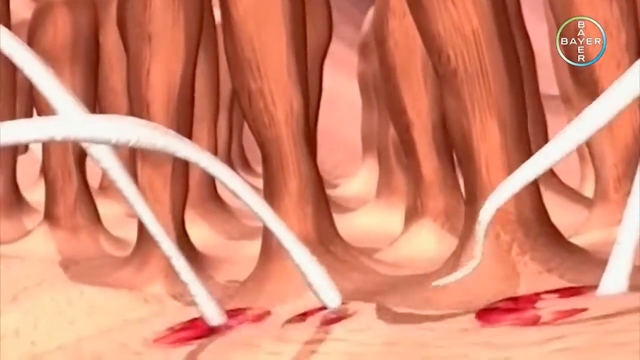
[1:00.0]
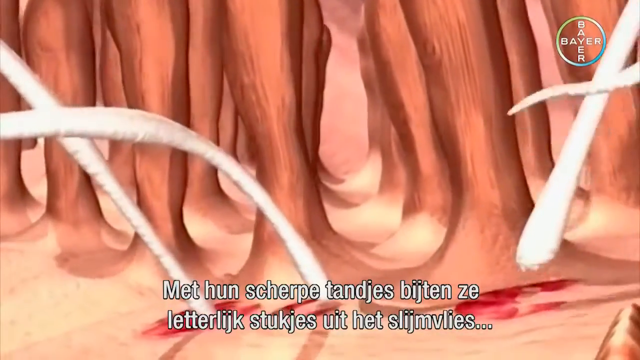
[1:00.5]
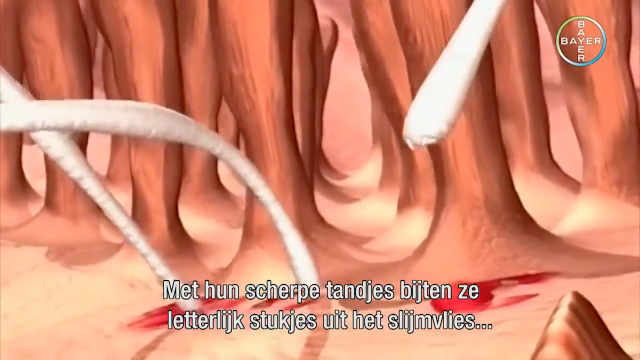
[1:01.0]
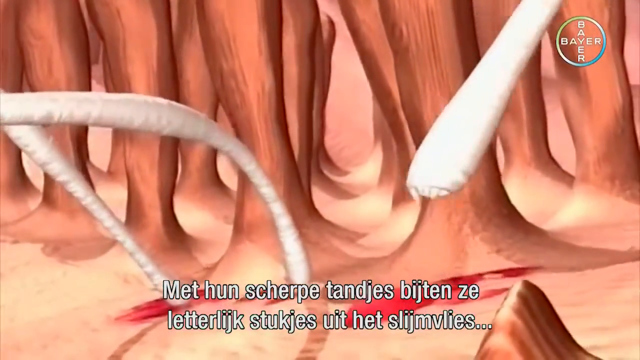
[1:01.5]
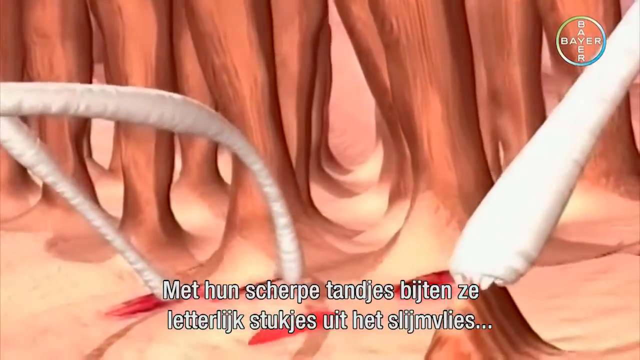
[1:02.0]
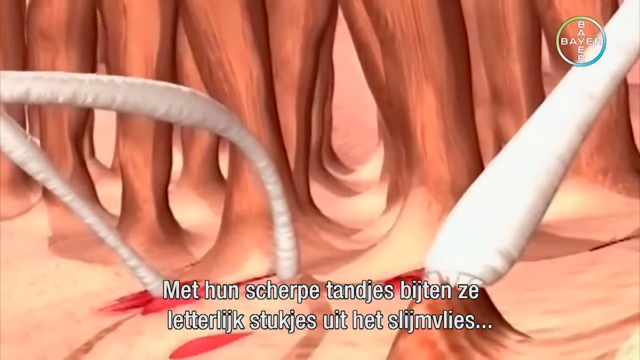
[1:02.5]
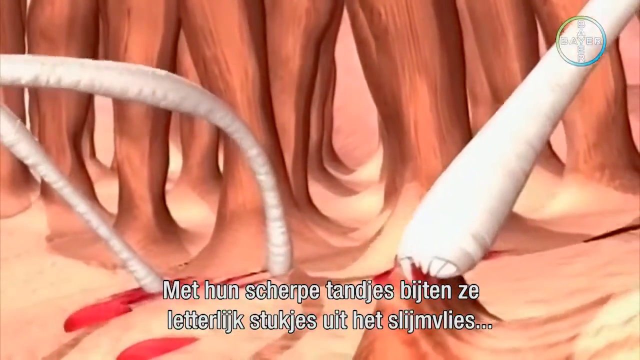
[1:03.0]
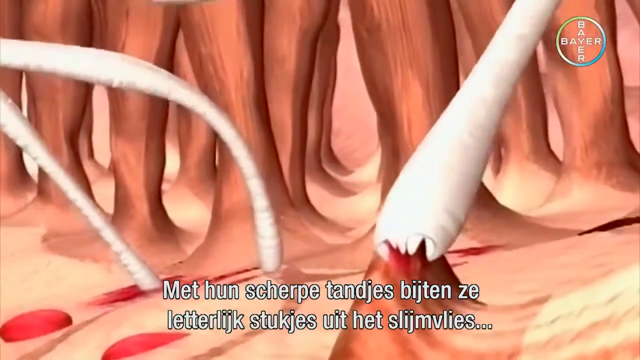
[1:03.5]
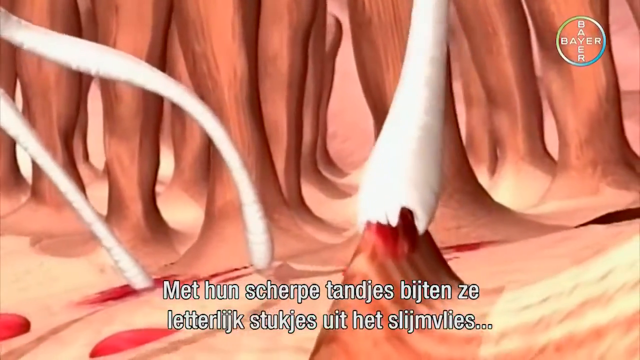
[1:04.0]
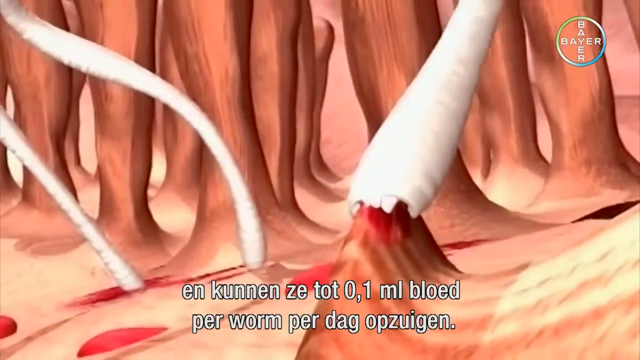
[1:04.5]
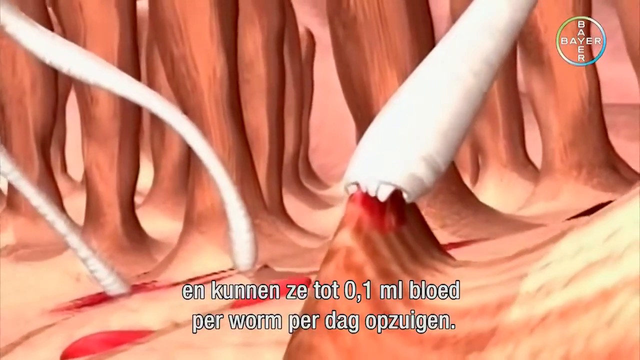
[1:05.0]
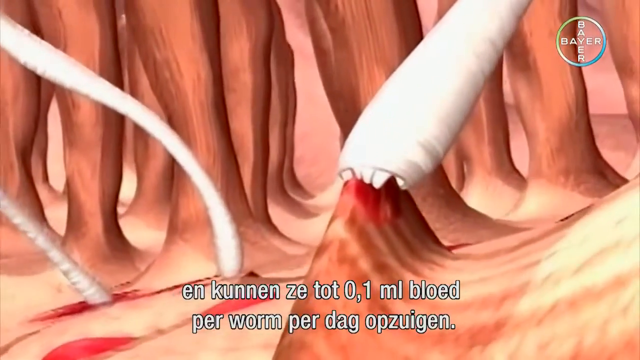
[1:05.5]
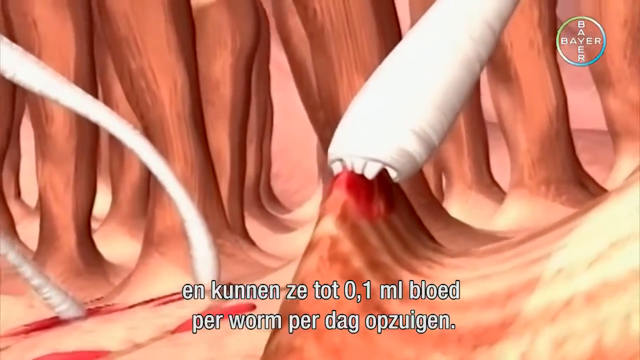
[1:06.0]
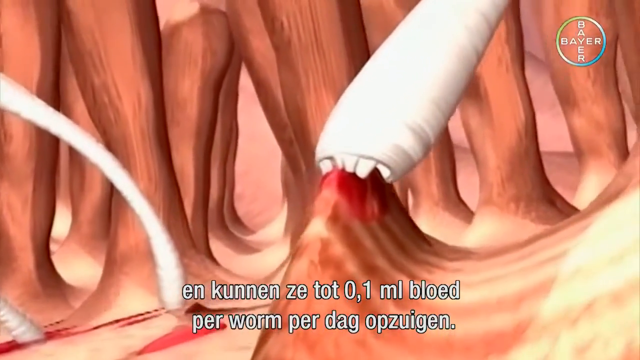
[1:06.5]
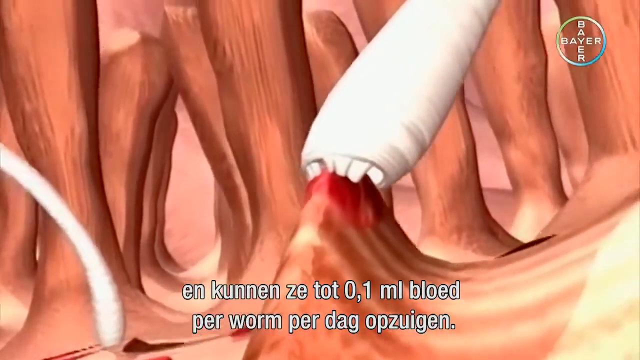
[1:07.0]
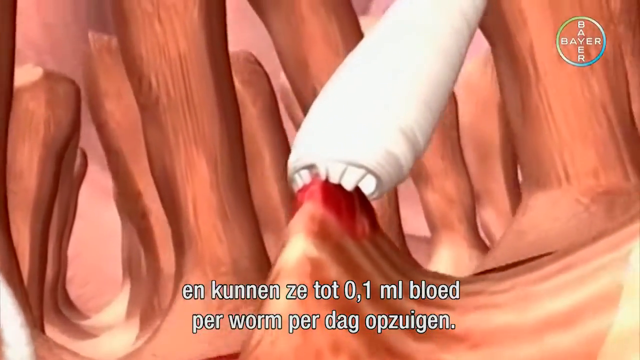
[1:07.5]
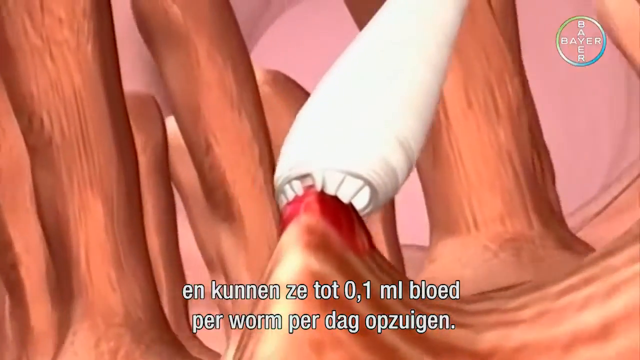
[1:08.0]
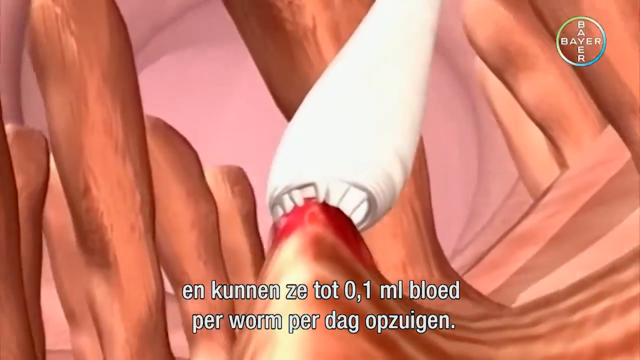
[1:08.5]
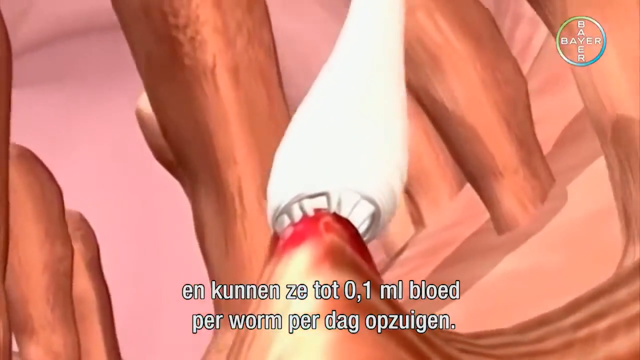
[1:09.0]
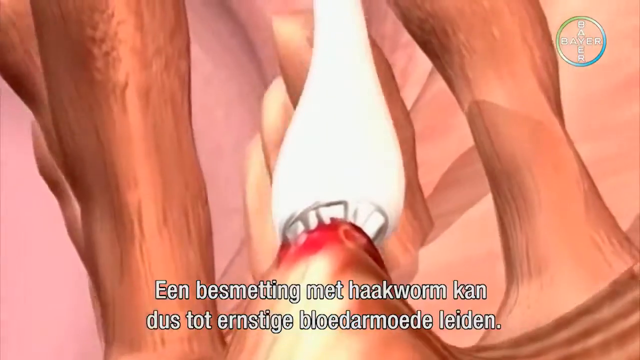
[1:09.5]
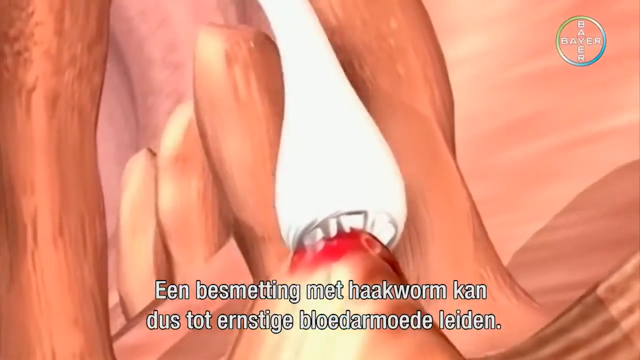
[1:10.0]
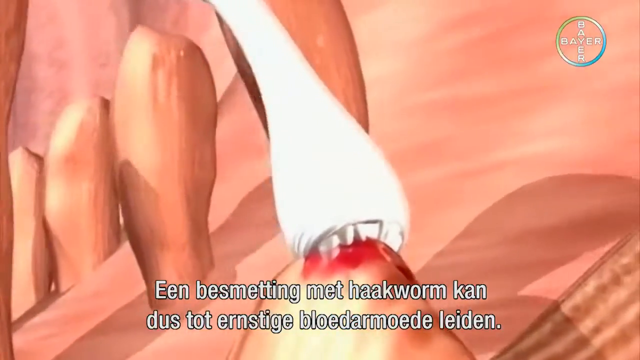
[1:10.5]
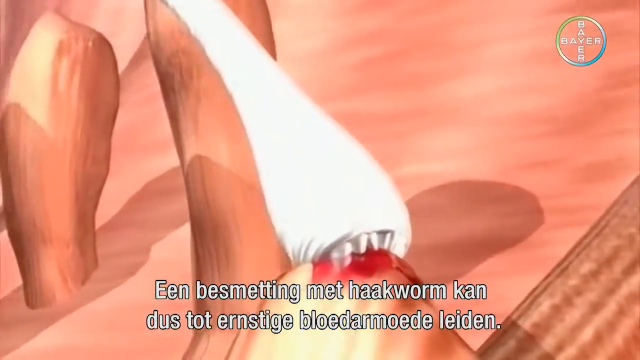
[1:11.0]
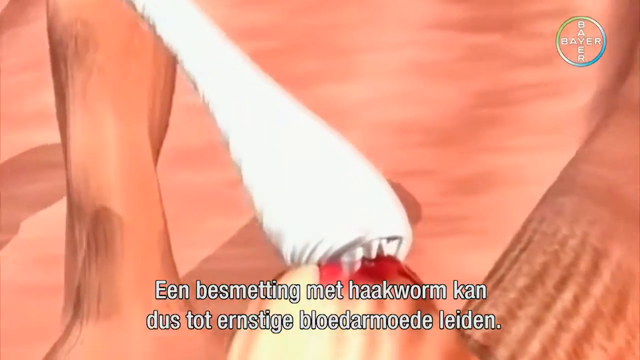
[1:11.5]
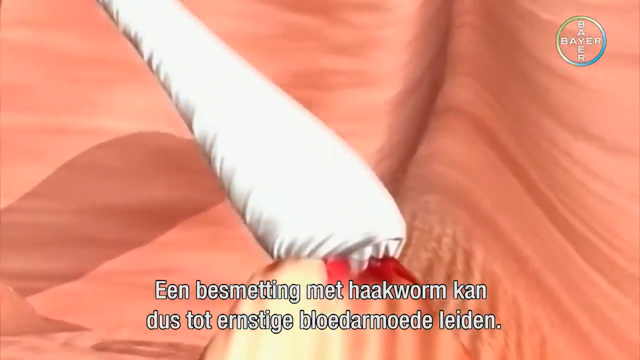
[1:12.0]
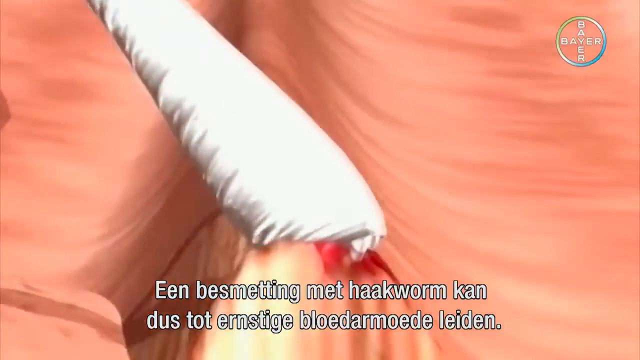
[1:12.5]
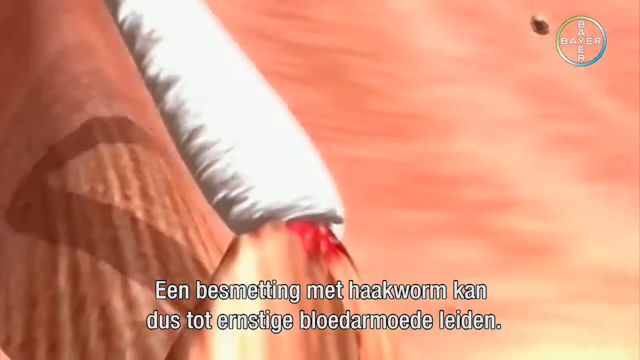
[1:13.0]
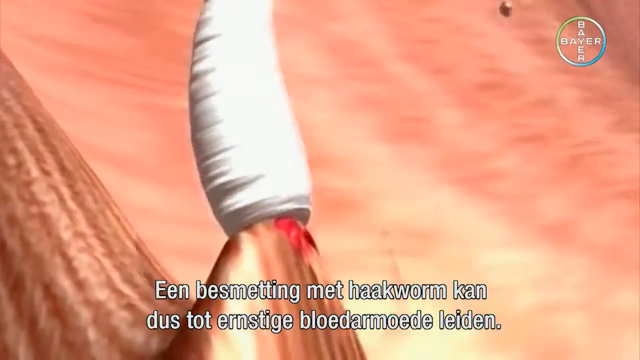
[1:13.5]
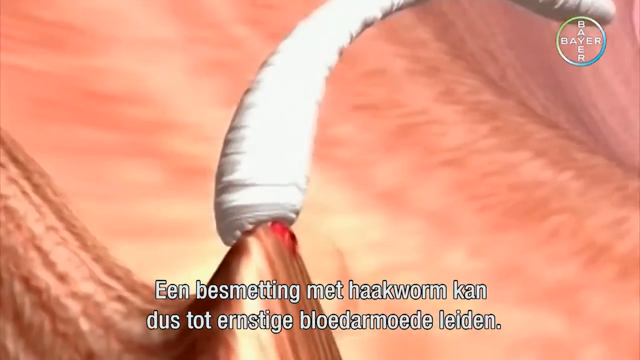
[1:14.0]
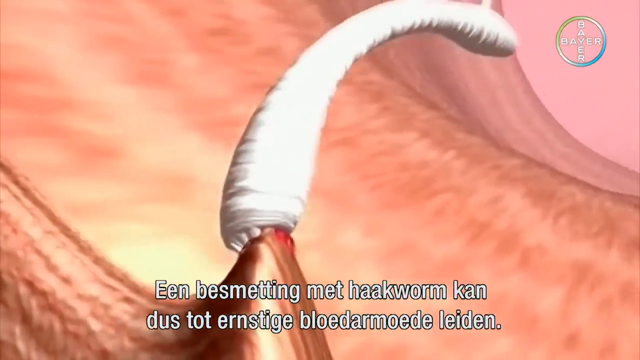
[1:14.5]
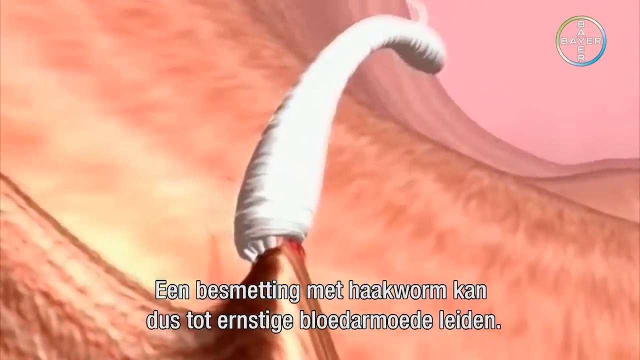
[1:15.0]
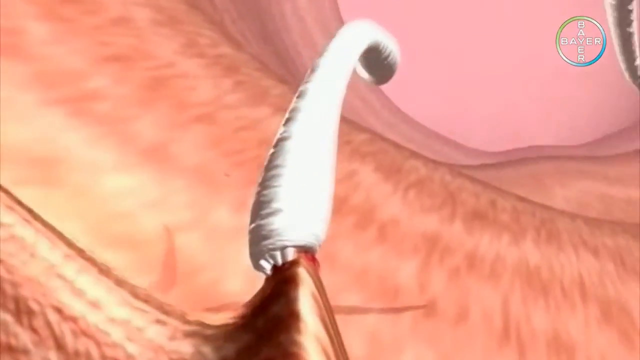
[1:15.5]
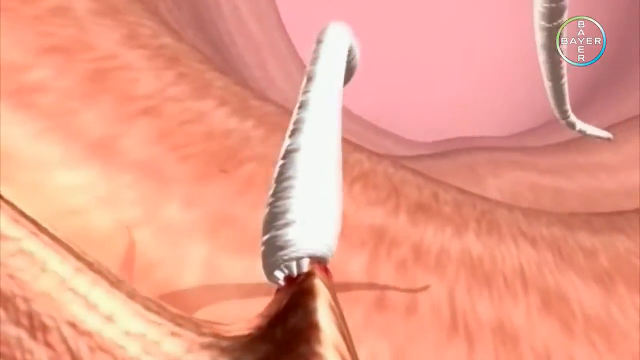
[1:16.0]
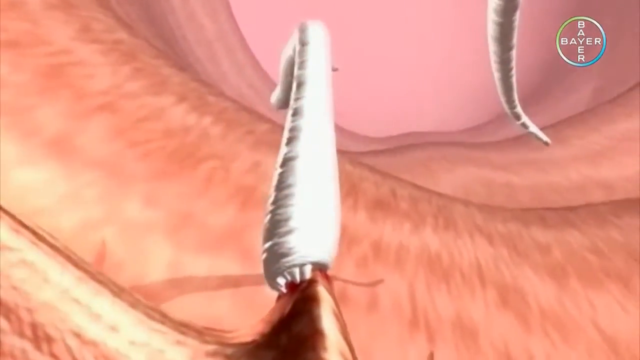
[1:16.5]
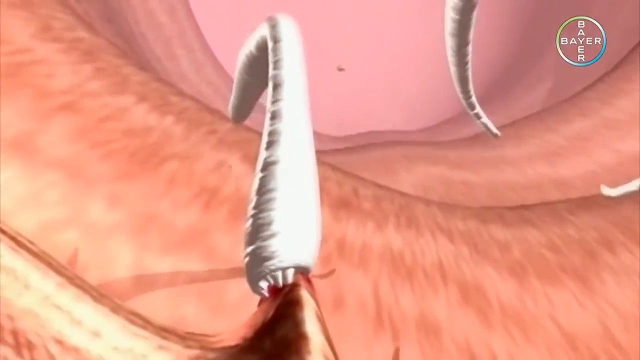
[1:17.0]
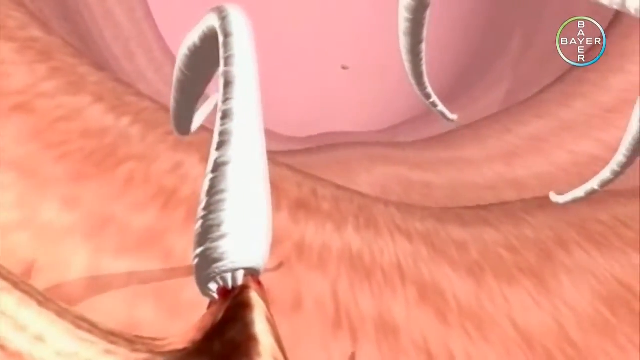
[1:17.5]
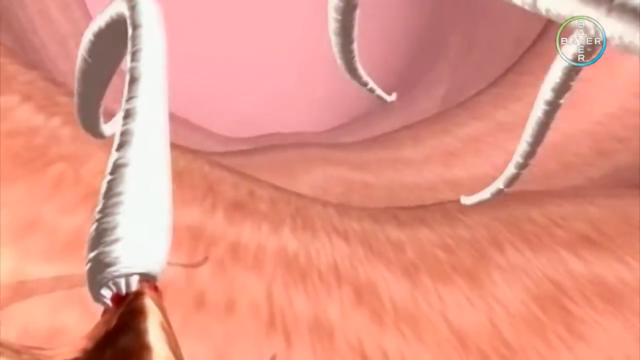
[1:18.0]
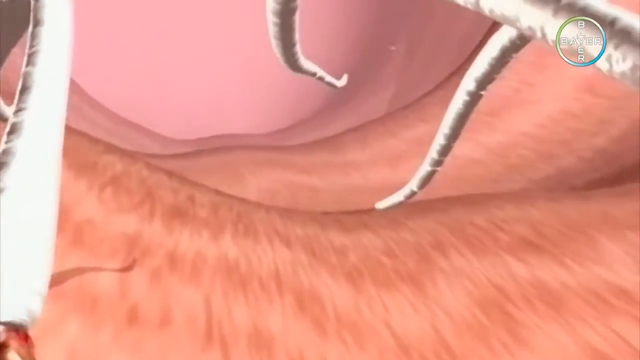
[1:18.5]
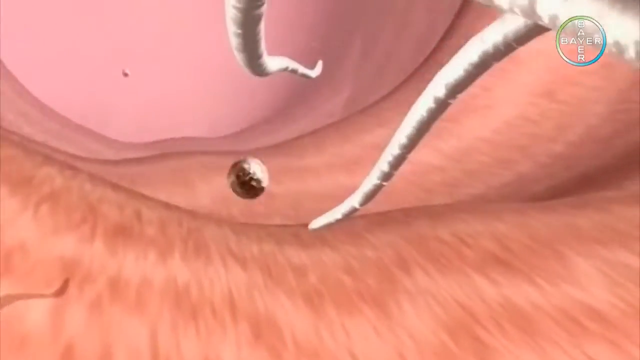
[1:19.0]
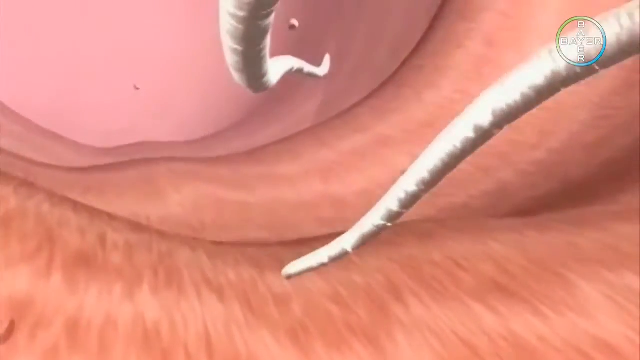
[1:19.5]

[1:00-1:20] Apparently white worms connect themselves to a bottom area, and some red seems to pop up as they connect. Tall brown things come up out of the bottom area, and white writing appears at the bottom of the screen. In the upper right corner is a circle with the word "Bayer" written twice, the two words connecting by the Y. The worms attach themselves to a brown hump on the ground, which turns more red-looking as they connect, and the worms appear to have teeth connecting them to the brown area. As the view turns, small organisms float around behind the worms.